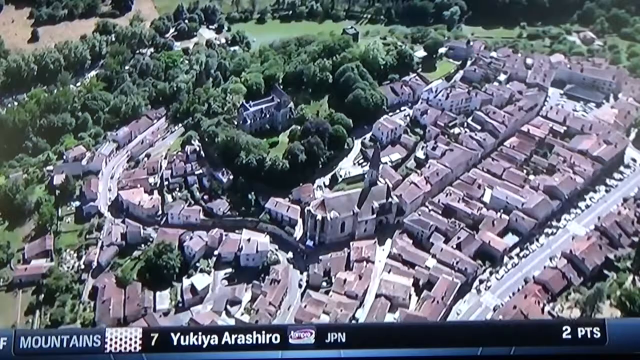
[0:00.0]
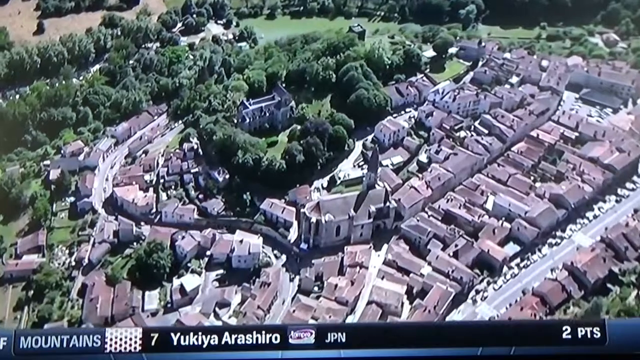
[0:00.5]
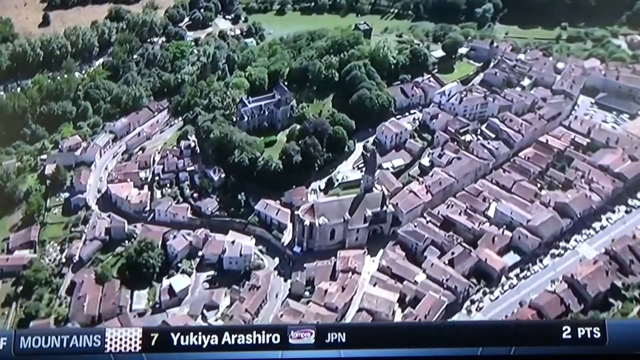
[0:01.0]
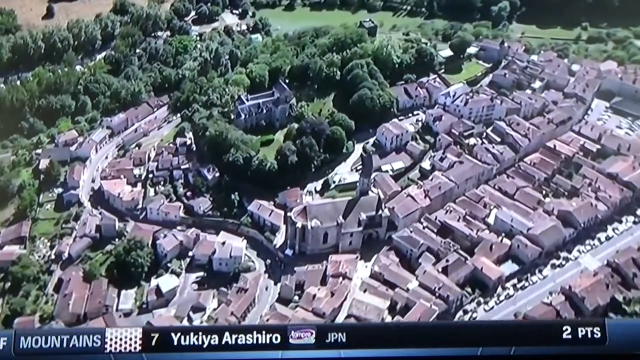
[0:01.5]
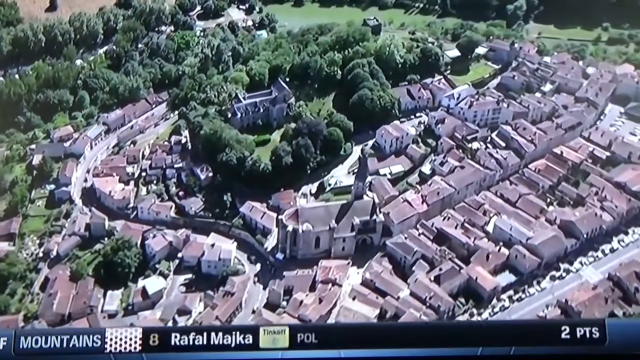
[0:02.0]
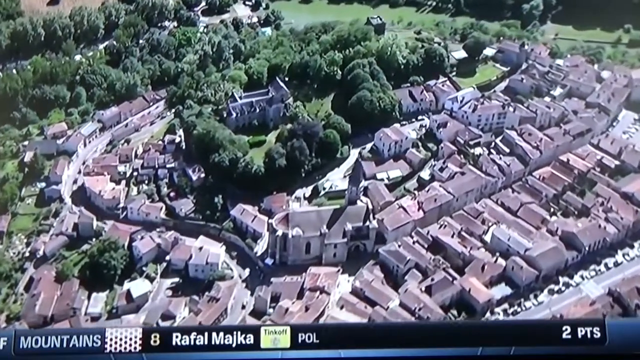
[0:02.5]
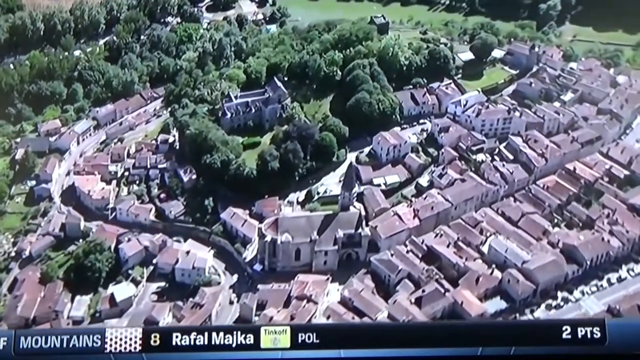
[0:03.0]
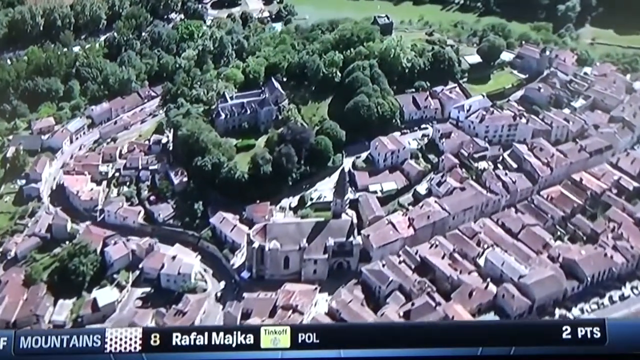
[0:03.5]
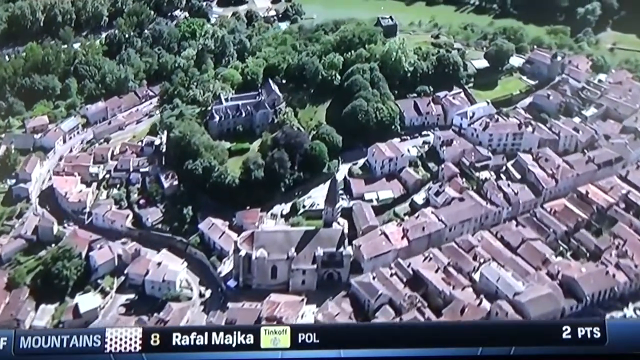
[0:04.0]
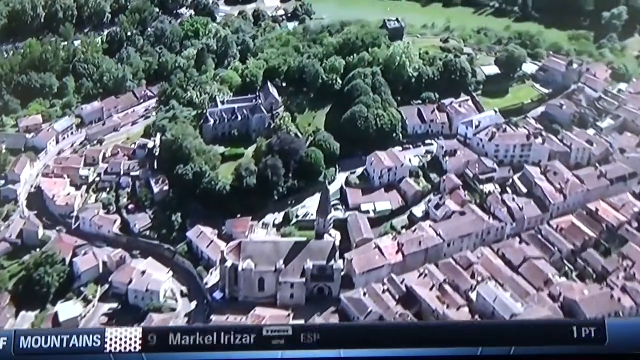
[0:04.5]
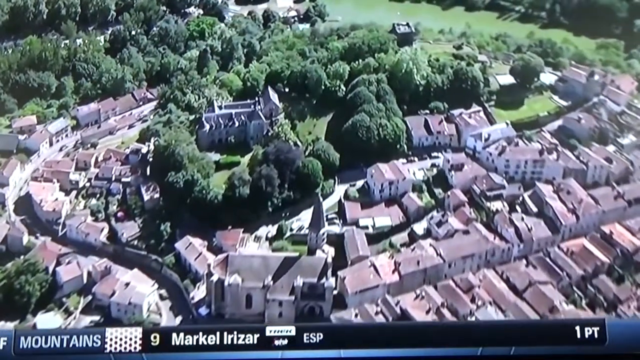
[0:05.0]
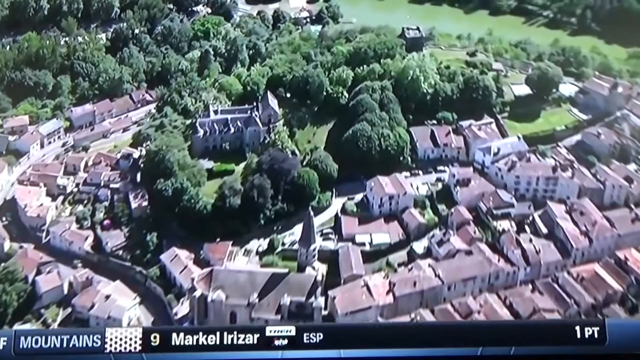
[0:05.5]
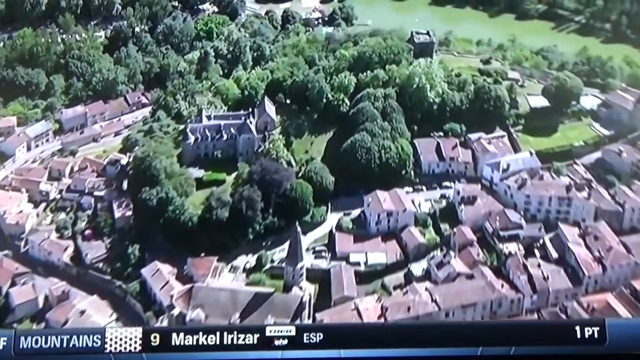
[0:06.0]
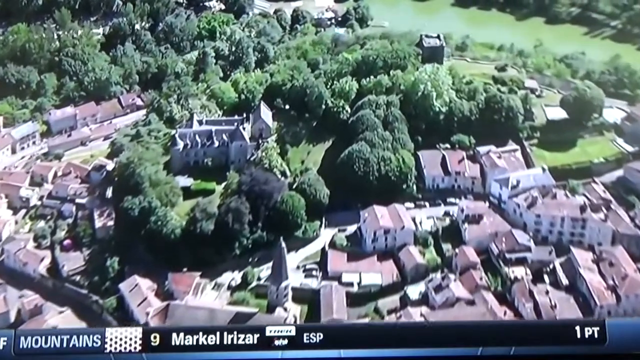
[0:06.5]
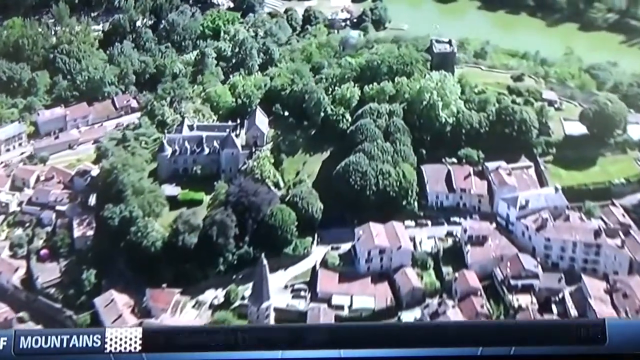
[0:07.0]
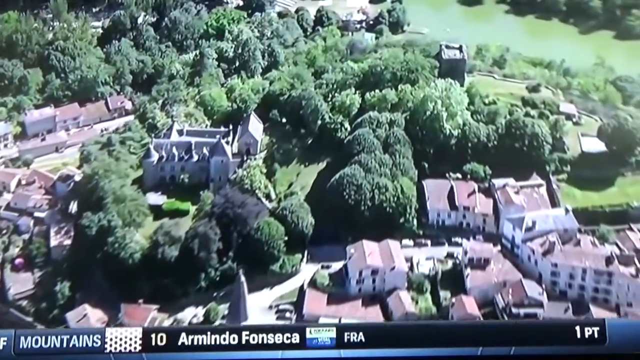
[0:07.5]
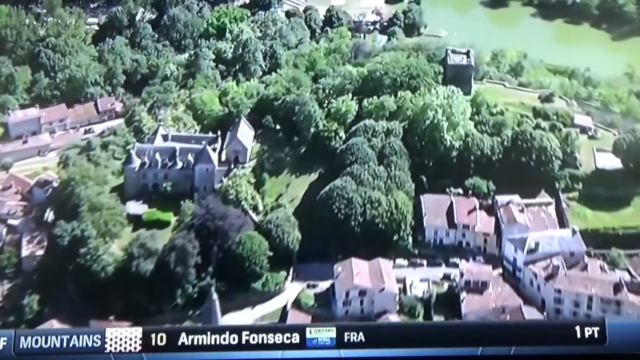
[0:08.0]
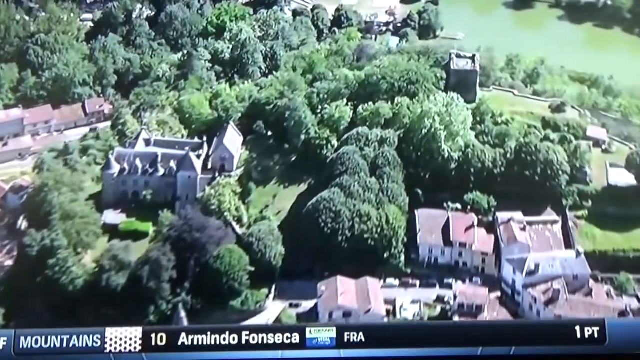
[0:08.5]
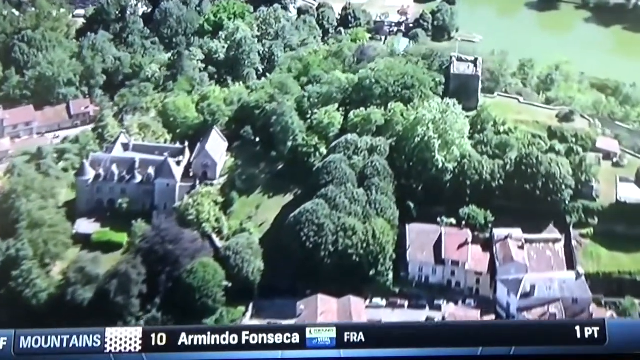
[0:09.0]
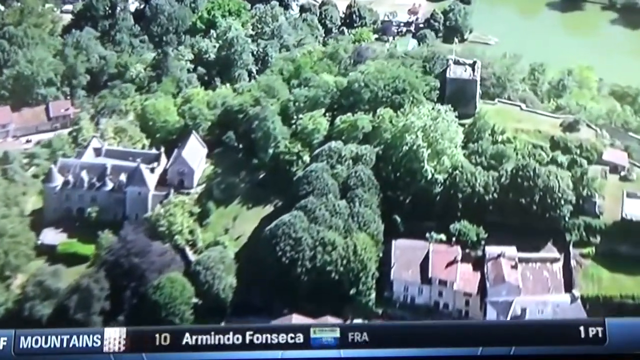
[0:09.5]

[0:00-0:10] An aerial view shows different kinds of mountains and many houses that seem close to each other. There are quite a number of mountains, which are named, and the place seems very scattered, with many green mountains and trees. Each mountain has a different number of points: one that seems to be the leader has 2 points, Rafal Majka has 1 point, Markel Irizar has 1 point, and Armindo Fonesca also has 1 point; they are from different countries. The roads seem very curved, the area has a single entry and one exit, and the houses look very similar.